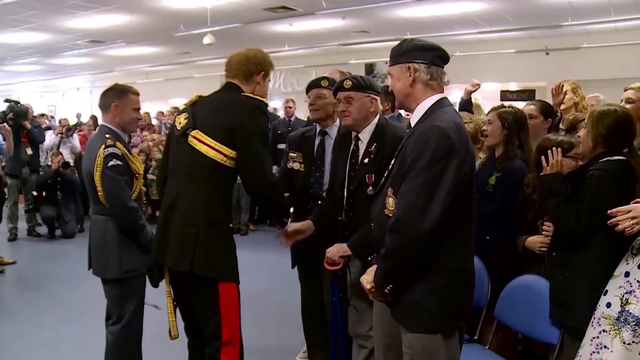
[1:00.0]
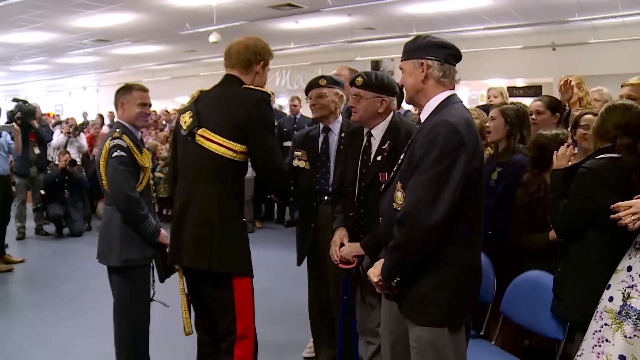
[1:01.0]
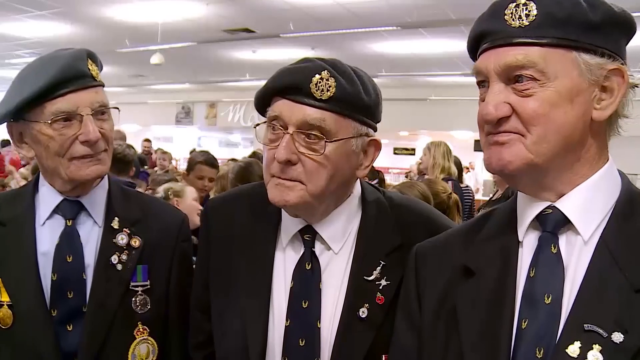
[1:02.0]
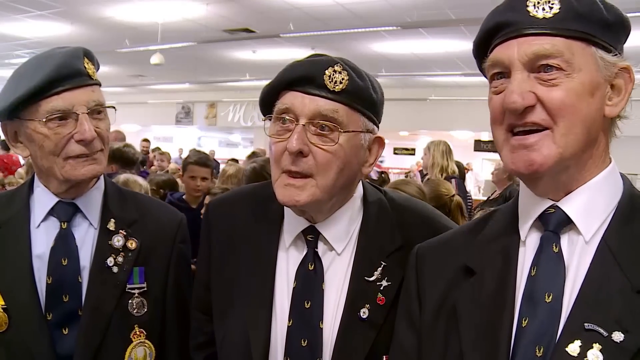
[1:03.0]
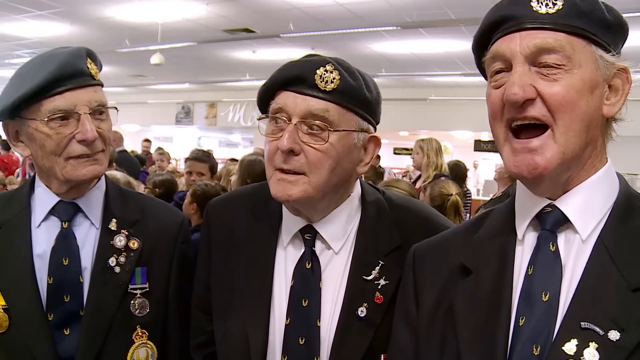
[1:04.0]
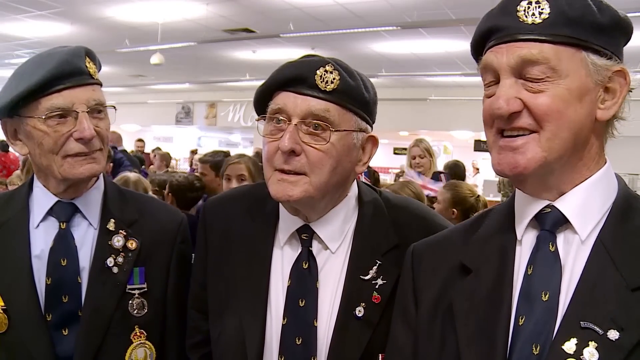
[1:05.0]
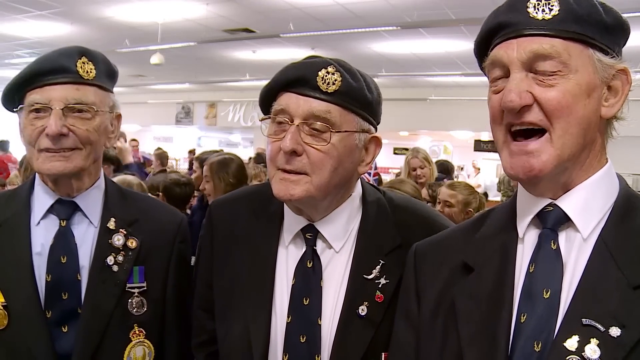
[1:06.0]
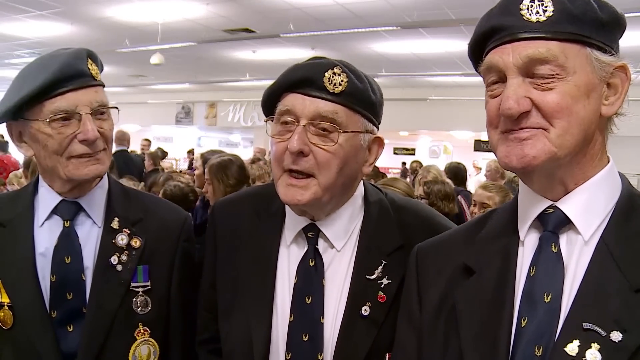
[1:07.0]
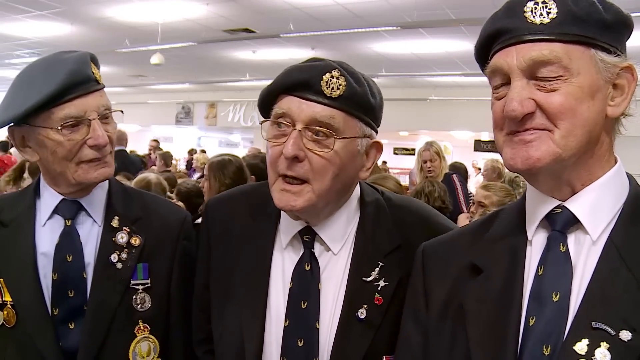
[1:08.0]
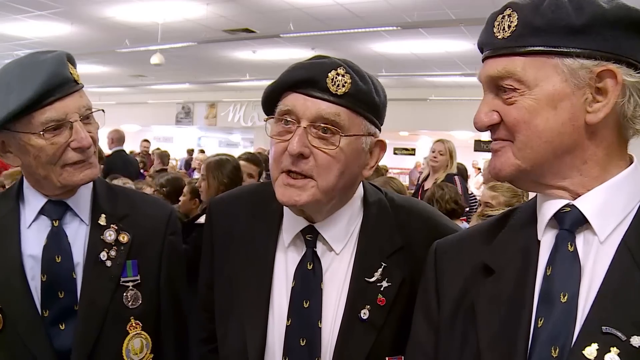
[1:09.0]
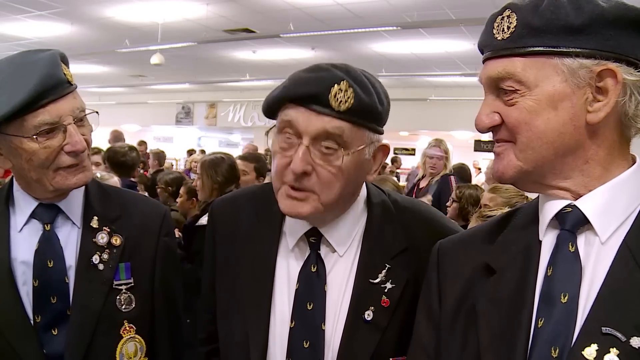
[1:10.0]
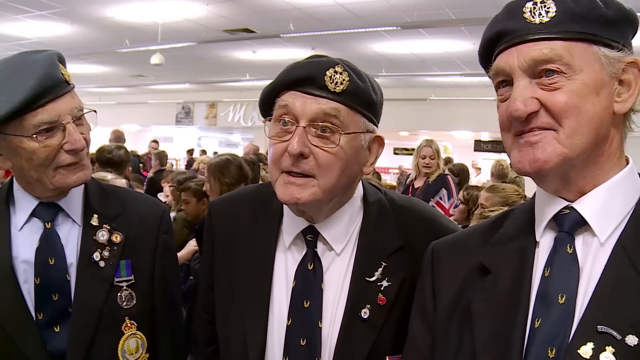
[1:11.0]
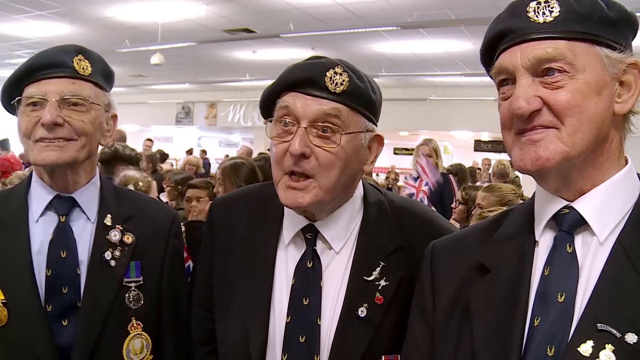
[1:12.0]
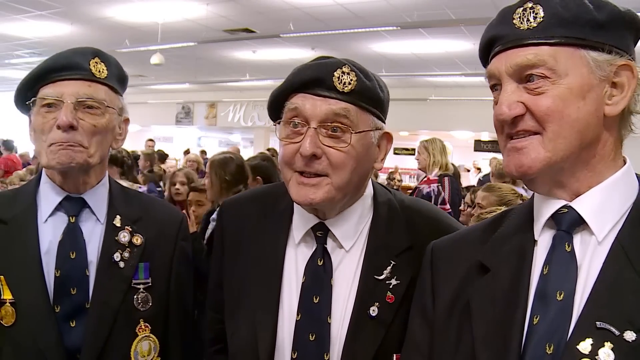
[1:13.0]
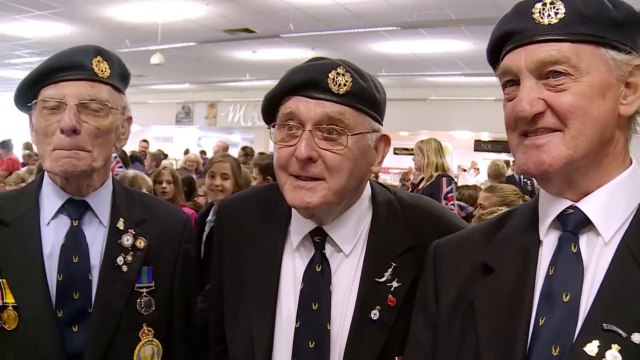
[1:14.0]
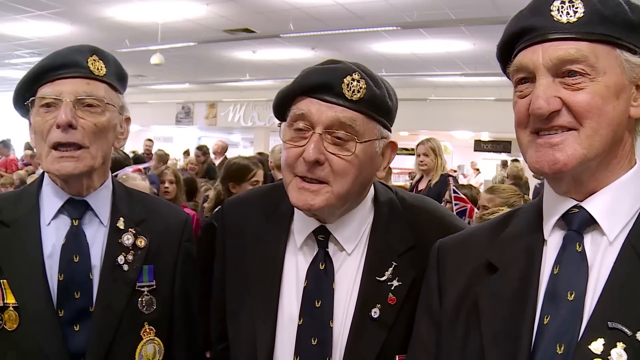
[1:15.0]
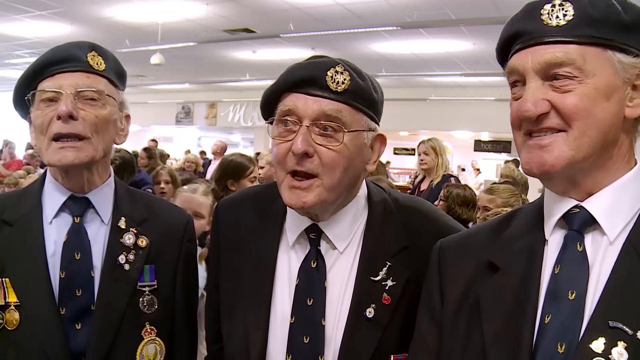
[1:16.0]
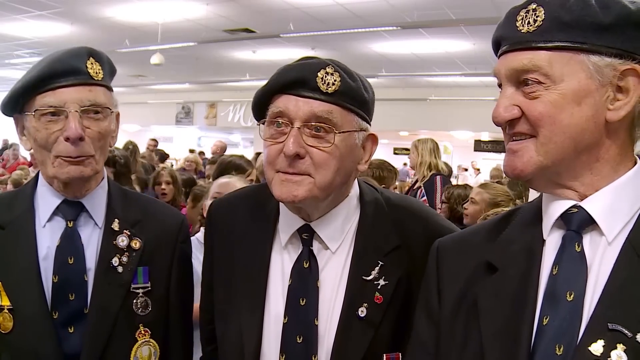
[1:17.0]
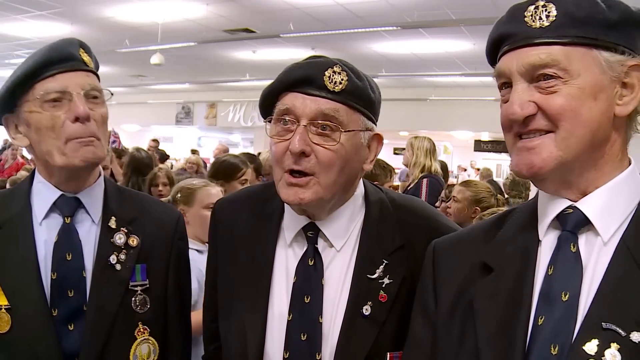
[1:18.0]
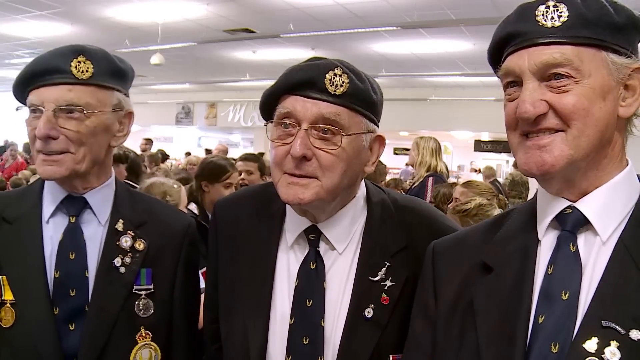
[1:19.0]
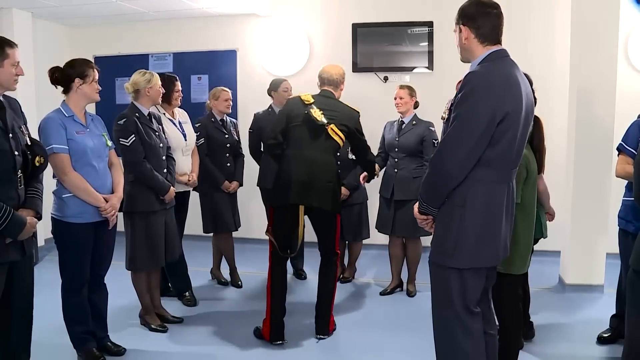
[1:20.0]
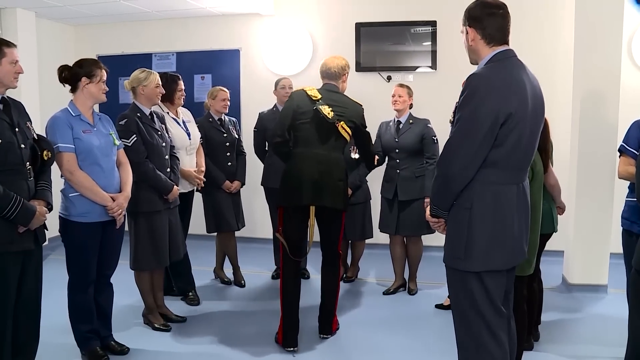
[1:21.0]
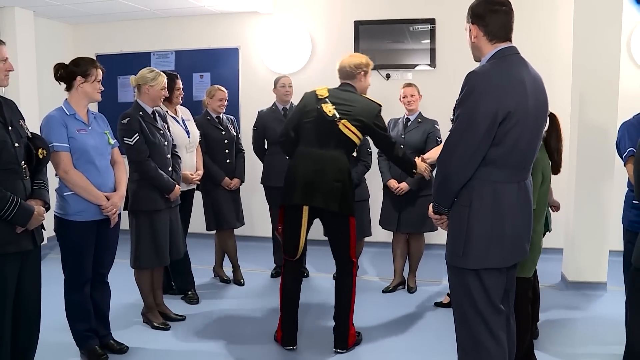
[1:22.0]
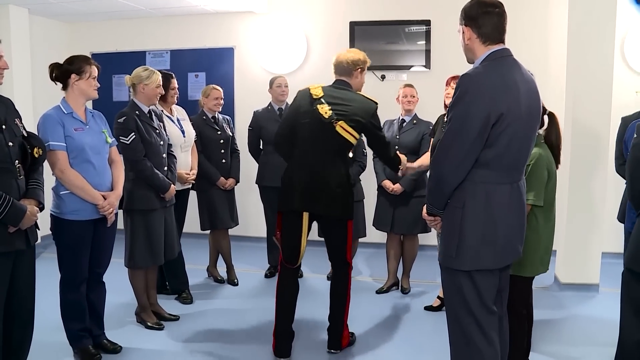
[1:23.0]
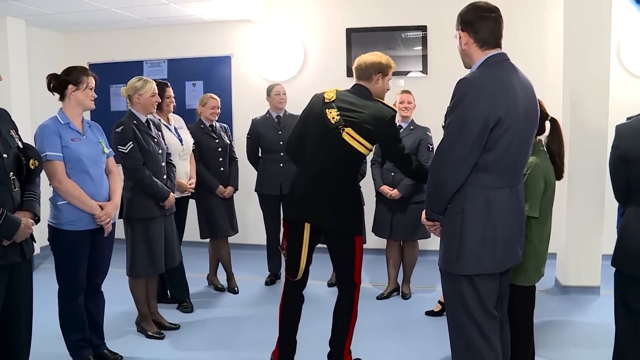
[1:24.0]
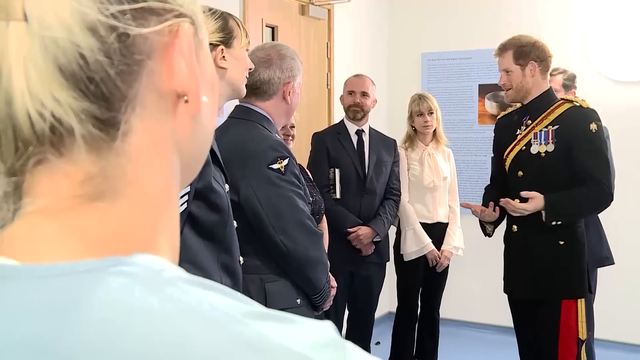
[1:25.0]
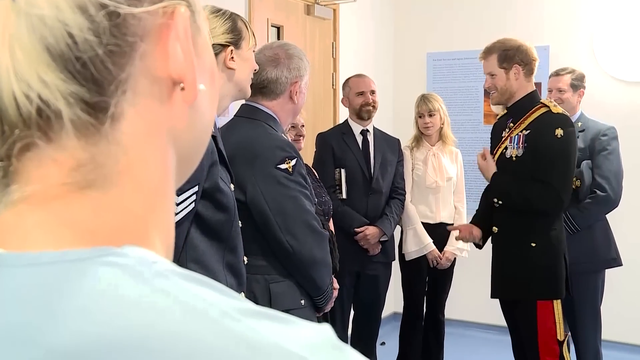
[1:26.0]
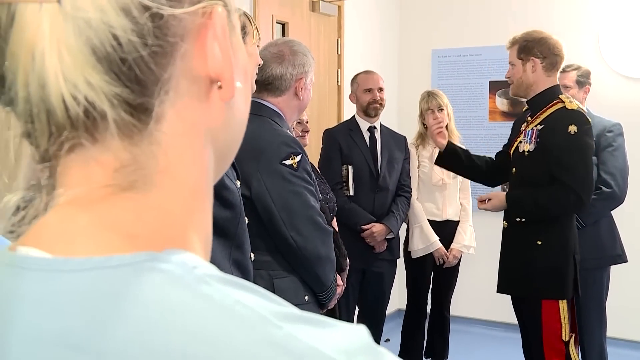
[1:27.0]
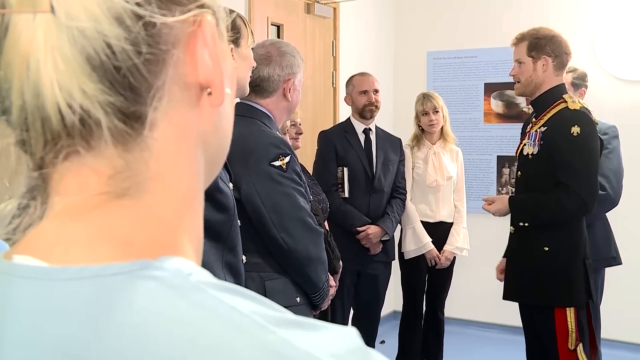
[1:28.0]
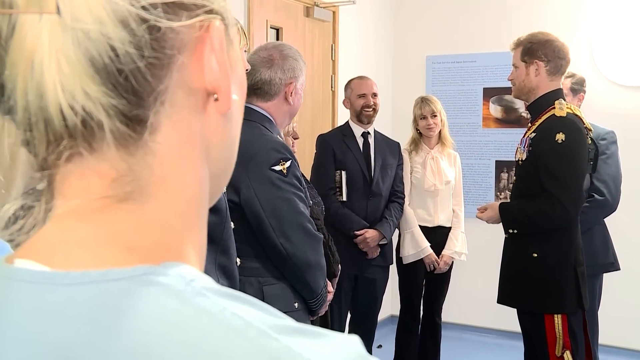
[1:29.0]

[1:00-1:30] Inside a building with a kind of low suspended ceiling, chairs are laid out and many people, apparently spectators, are sat in them. At the front, three veterans decorated with all their medals and wearing berets are stood up, and Prince Harry talks to them all and shakes their hands. A man in a grey military suit accompanies Prince Harry. The camera then focuses on the three veterans, who may be in their eighties, as they are interviewed on camera. The man on the very right talks; then the man in the middle starts talking while the other two look at him; the man on the left nods and then takes his turn to talk. The scene then changes to Prince Harry shaking hands with military personnel, including women in skirts and tights and a couple of women dressed in nurses' uniforms. Prince Harry then talks to a group of people stood by a door; he seems very relaxed, and everyone's attention is on him.